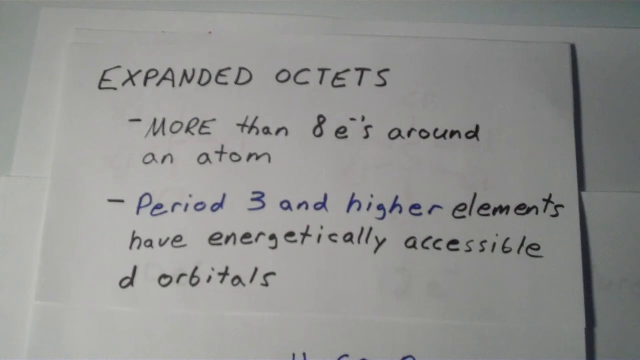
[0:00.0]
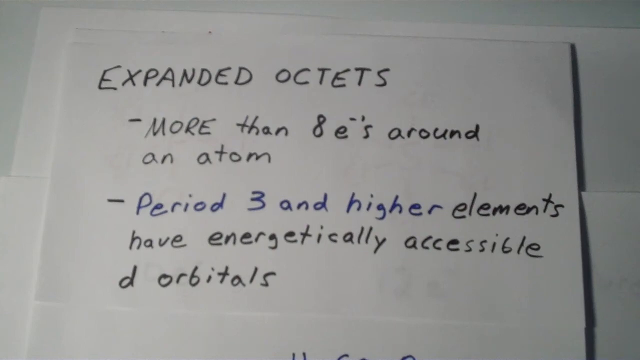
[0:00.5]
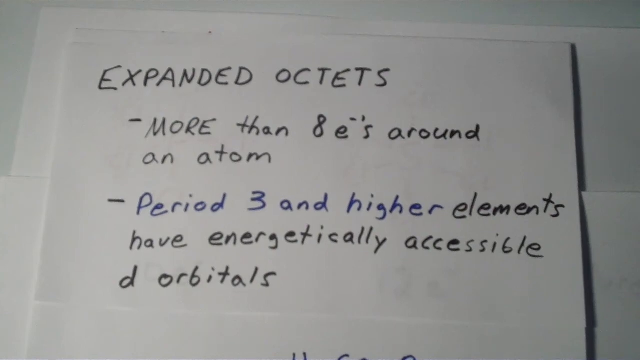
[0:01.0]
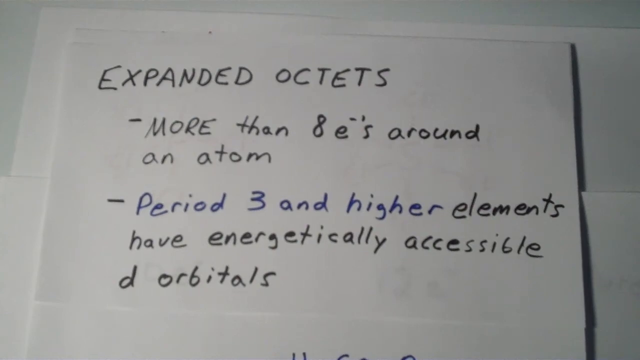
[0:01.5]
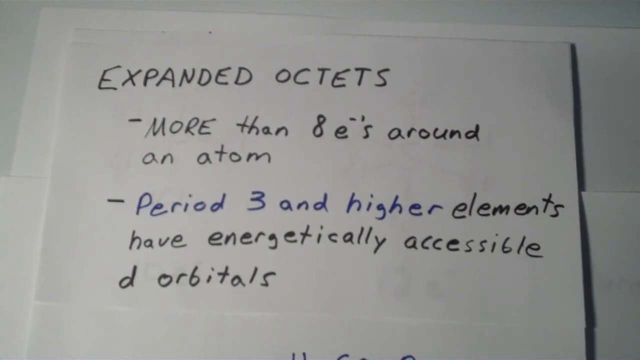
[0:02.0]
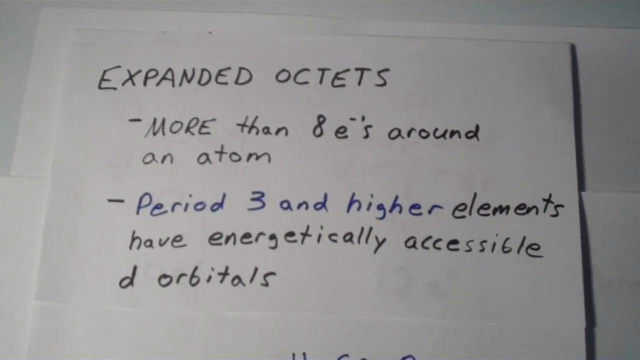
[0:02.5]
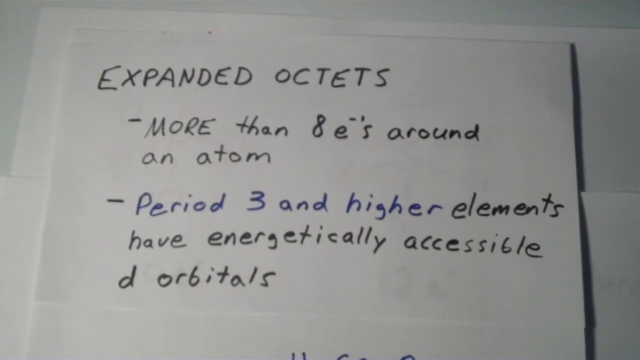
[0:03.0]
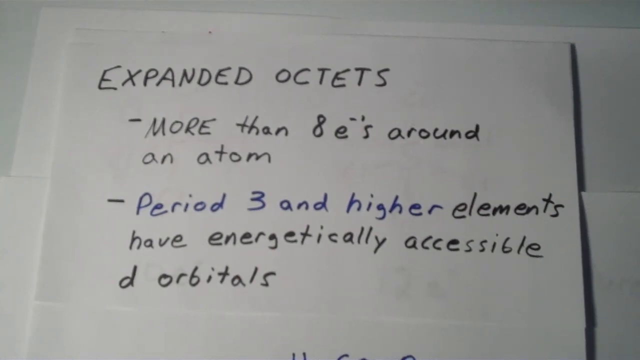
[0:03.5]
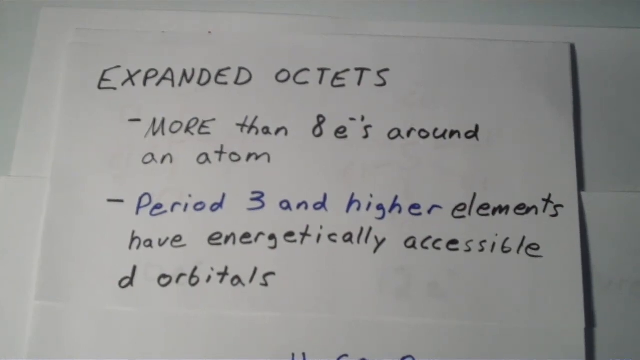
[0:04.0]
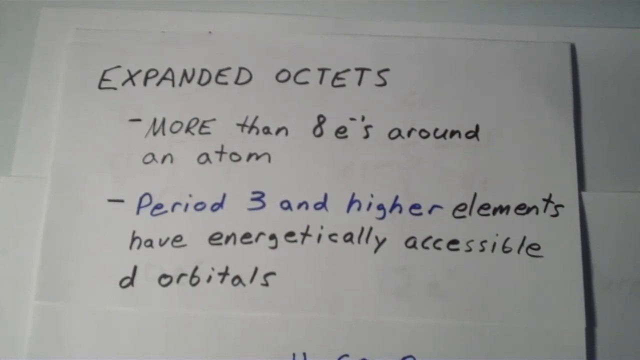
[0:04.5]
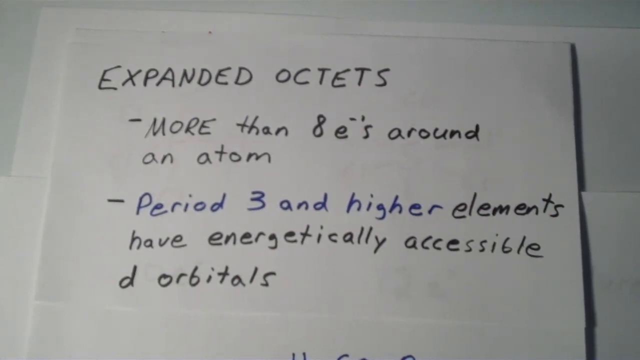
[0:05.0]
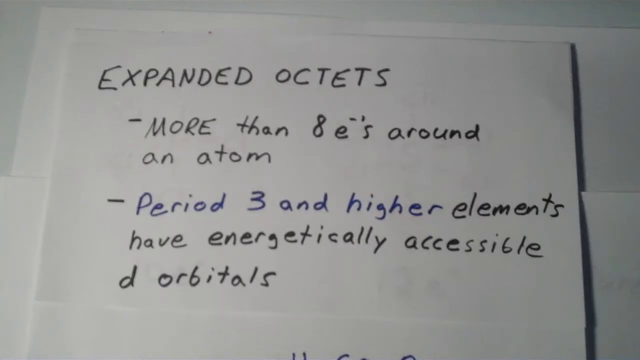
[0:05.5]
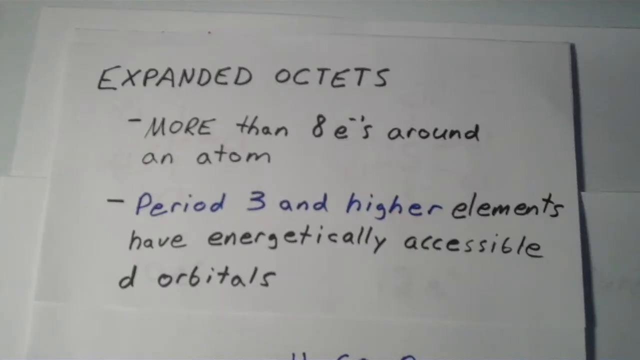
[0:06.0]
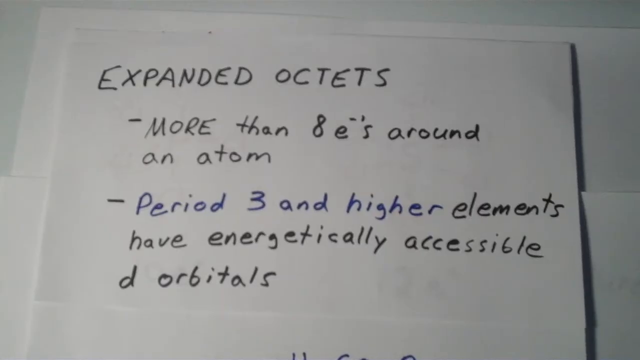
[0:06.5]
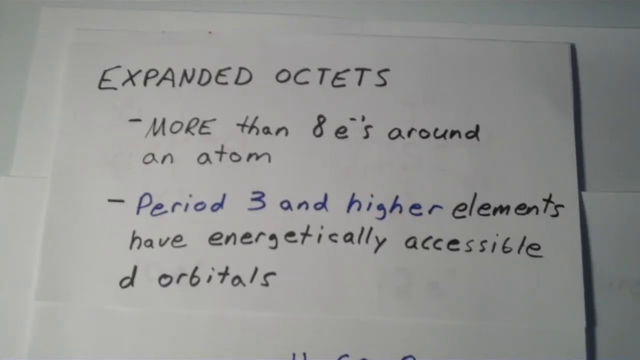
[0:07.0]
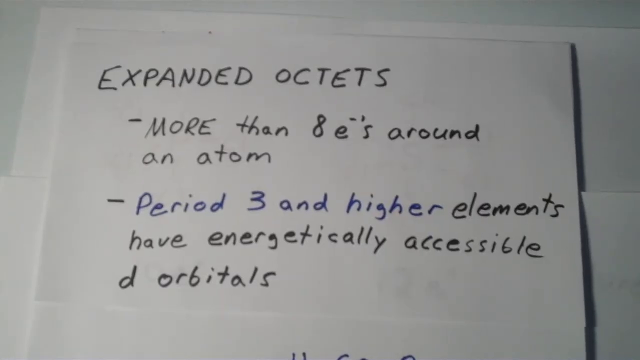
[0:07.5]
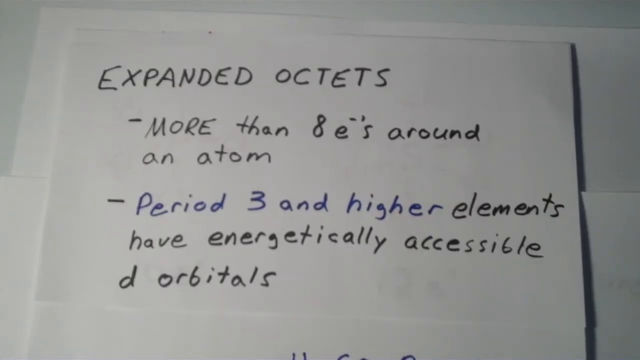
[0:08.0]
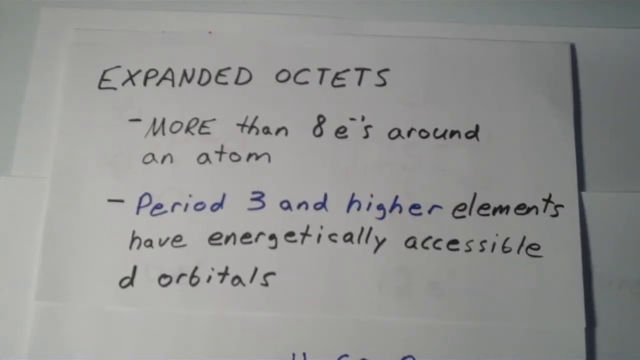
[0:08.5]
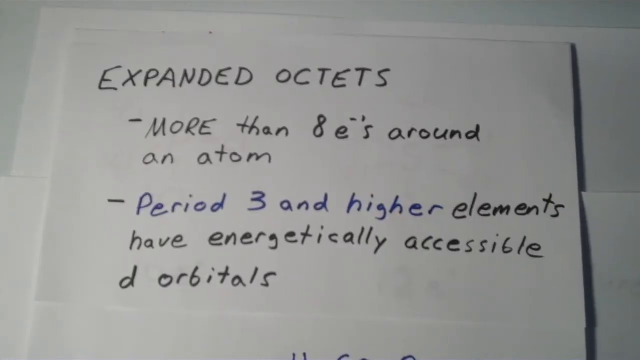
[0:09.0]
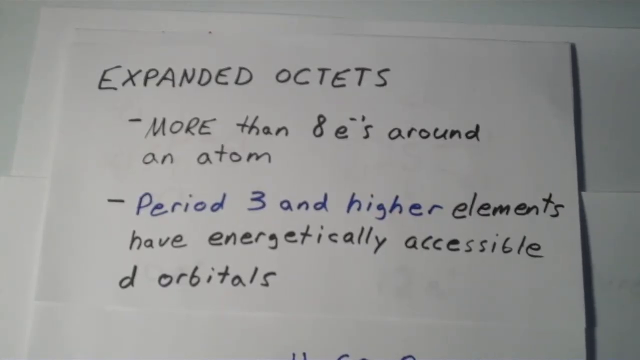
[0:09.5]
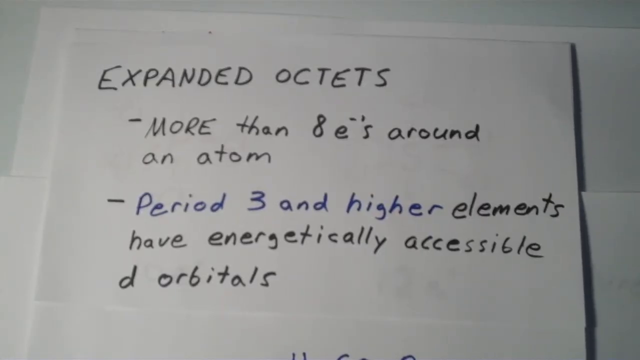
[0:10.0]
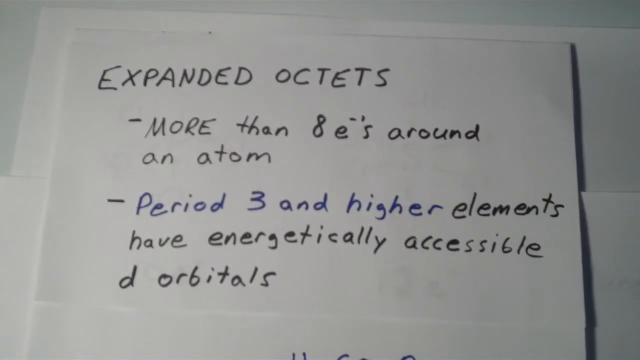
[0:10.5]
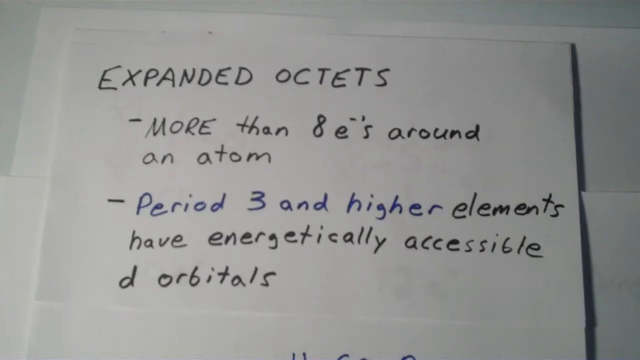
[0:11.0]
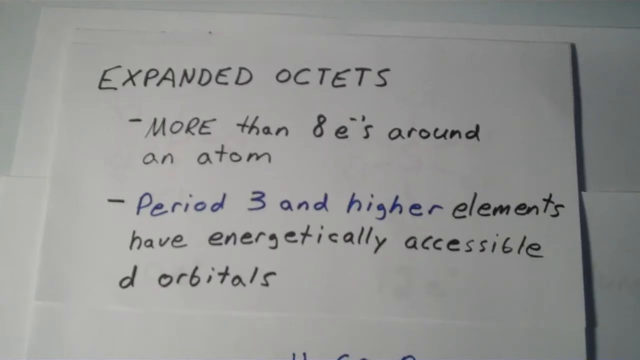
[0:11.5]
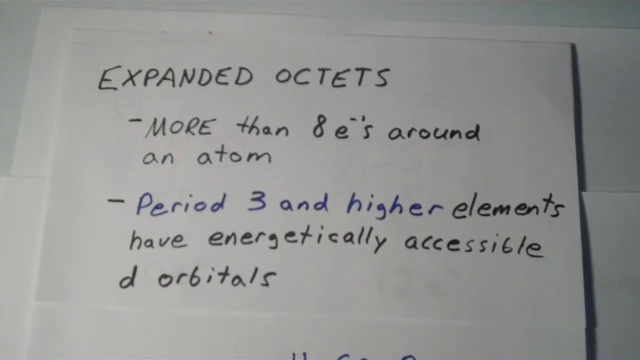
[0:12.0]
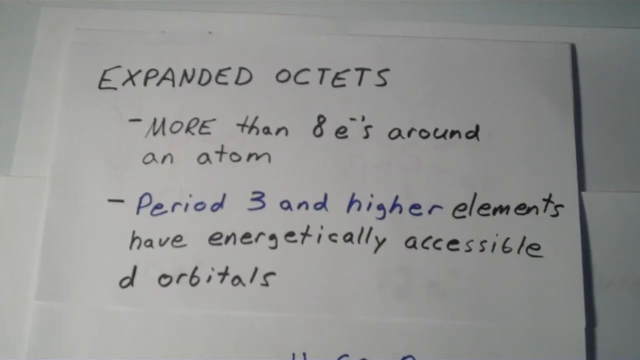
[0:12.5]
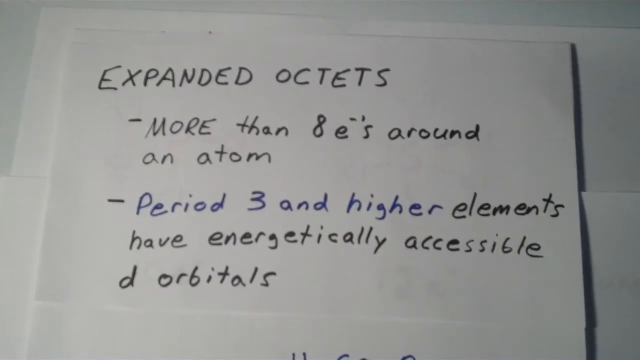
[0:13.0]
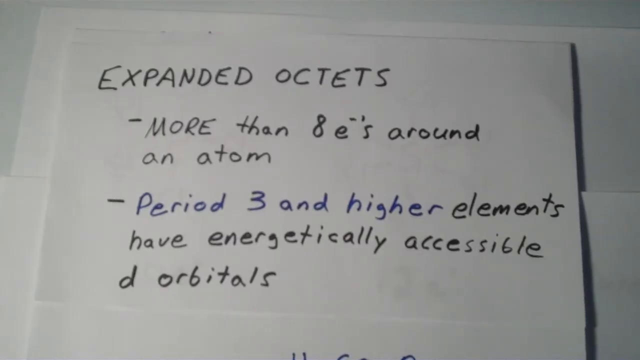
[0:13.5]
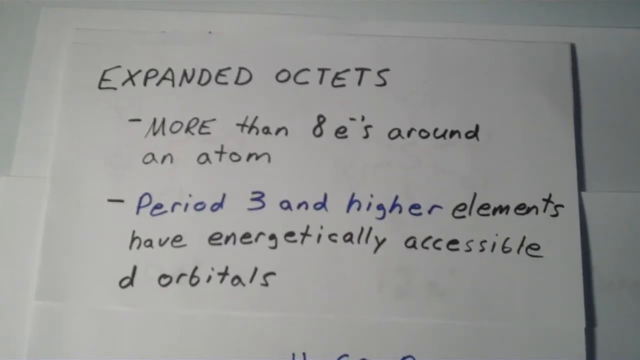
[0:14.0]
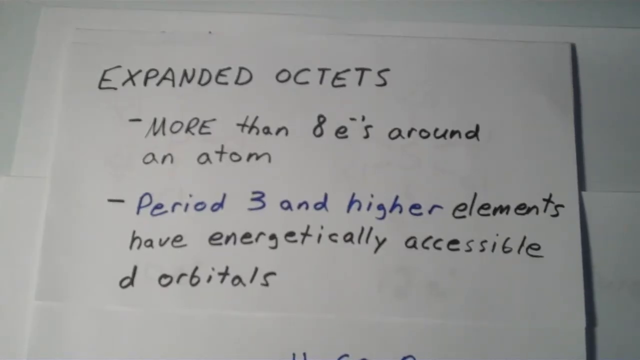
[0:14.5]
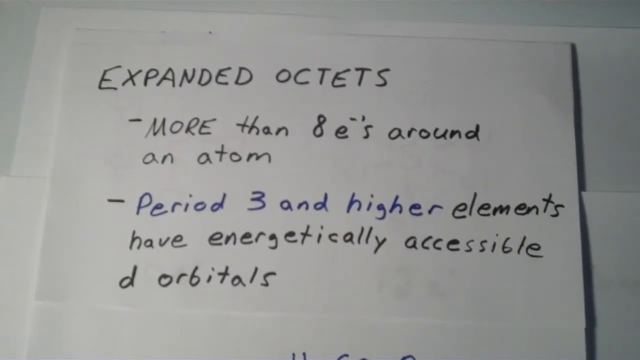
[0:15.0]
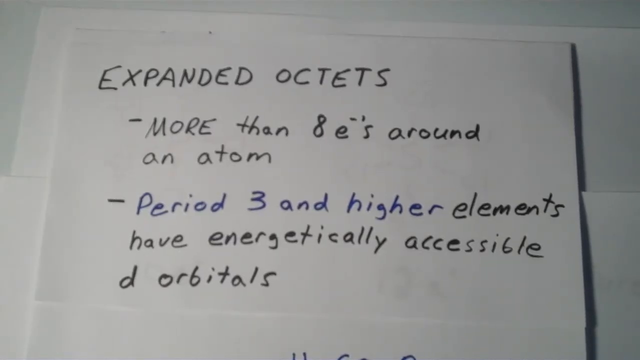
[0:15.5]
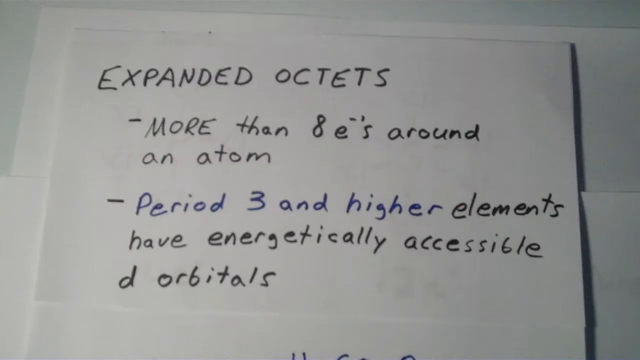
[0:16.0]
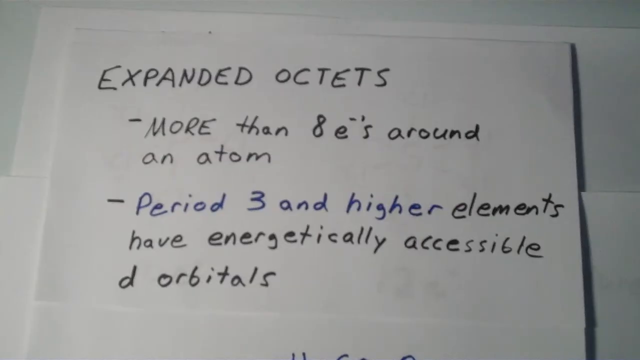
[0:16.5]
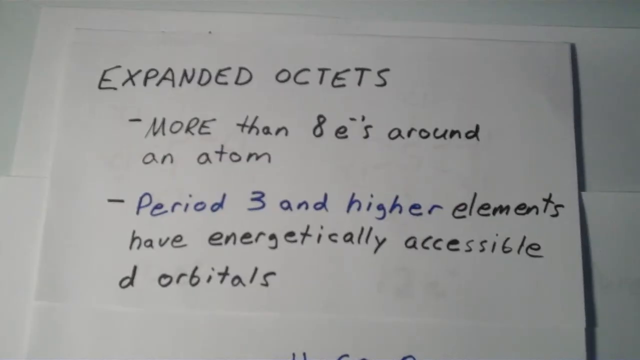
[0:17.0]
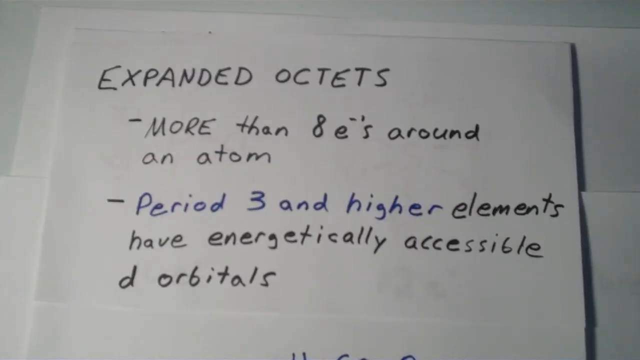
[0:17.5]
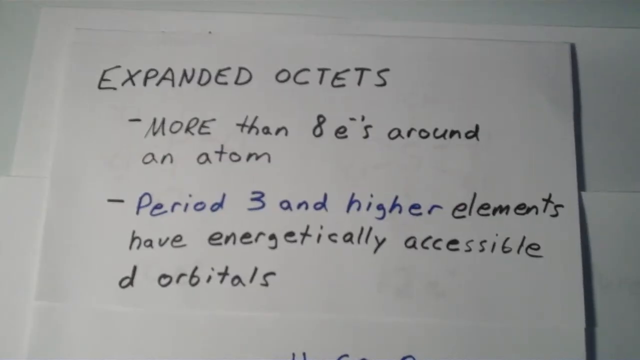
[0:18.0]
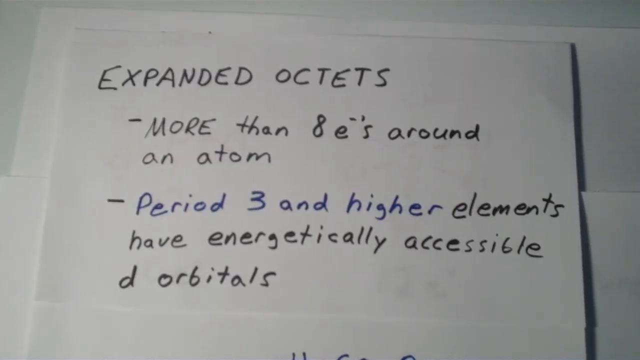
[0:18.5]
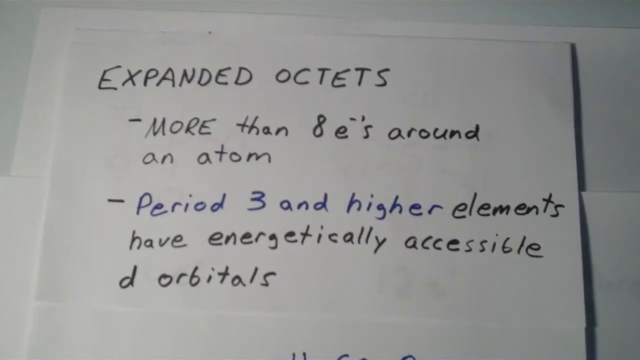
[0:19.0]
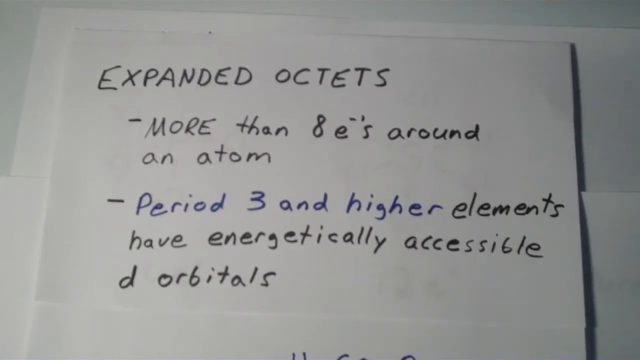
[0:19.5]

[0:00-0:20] An educational video shows a white piece of paper with handwritten text in black. The title is "Expanded Octets," followed by two dashed lines. The first reads "more than eight electrons around an atom," and the second reads "period three and higher elements have energetically accessible d-orbitals." The first four words, "period three and higher," are in blue, while the rest of the sentence is in black. The view stays on this handwritten page and nothing changes. The lighting is low, and there are some shadows in the background.